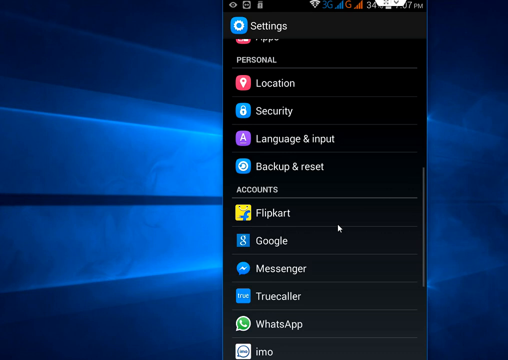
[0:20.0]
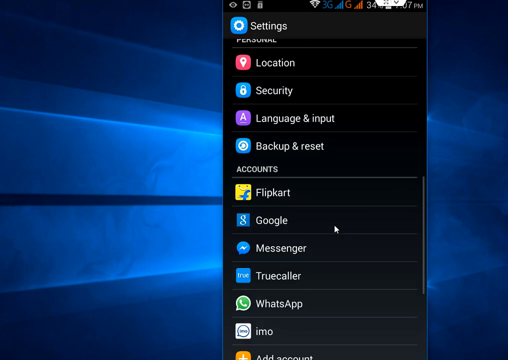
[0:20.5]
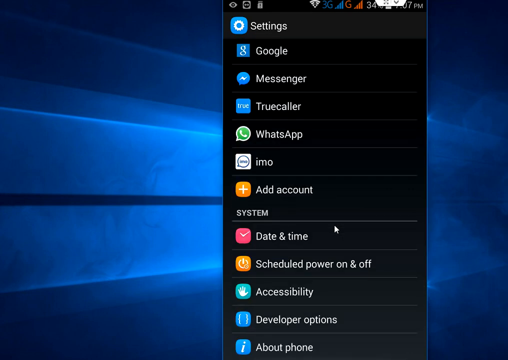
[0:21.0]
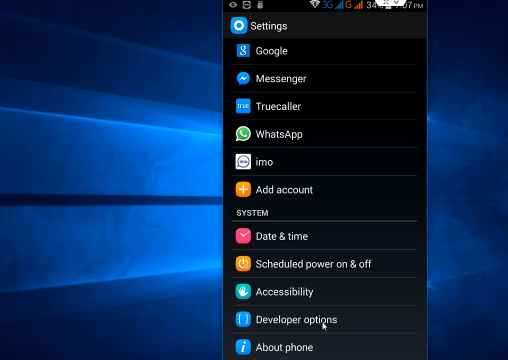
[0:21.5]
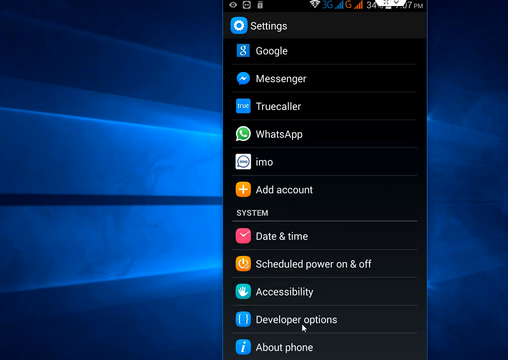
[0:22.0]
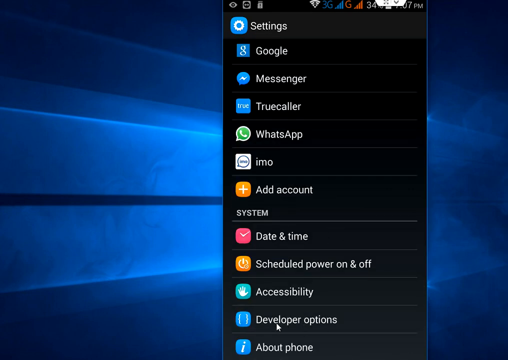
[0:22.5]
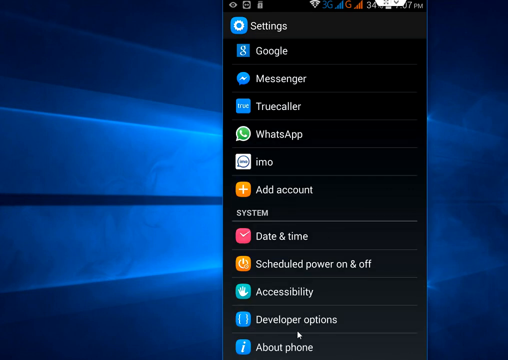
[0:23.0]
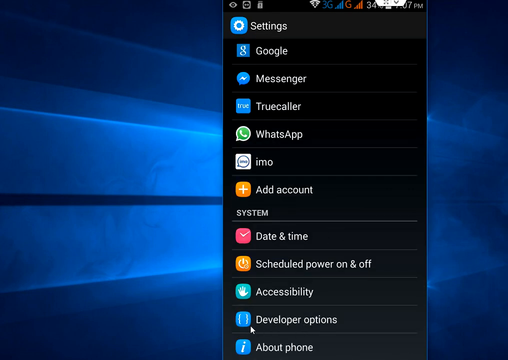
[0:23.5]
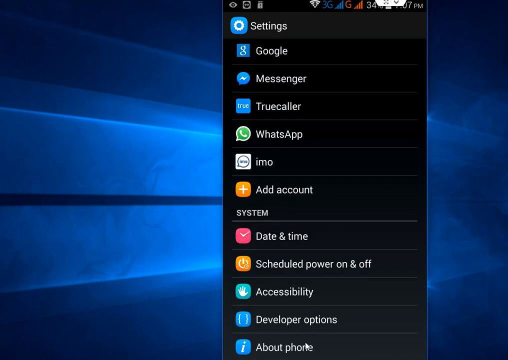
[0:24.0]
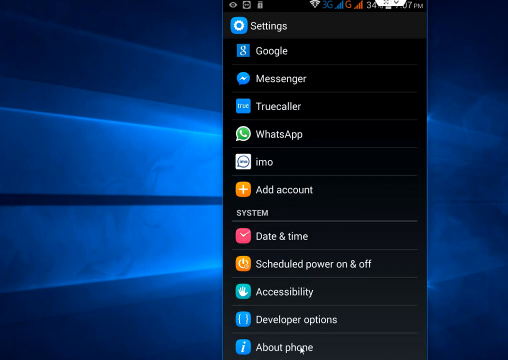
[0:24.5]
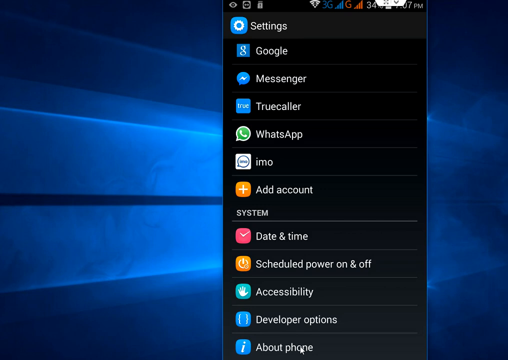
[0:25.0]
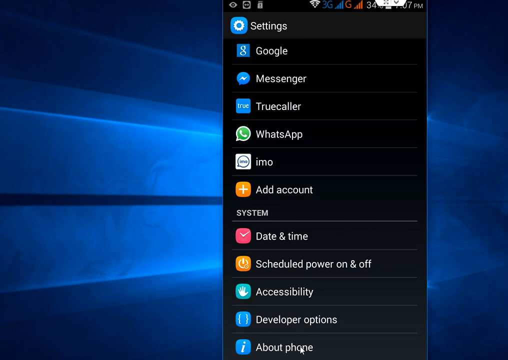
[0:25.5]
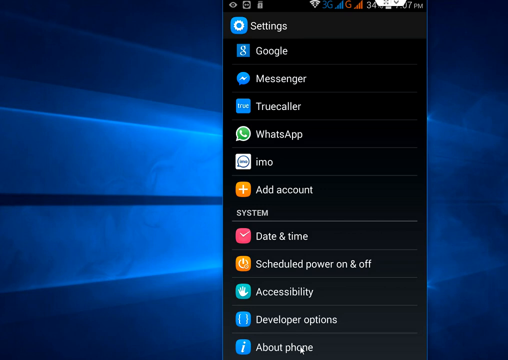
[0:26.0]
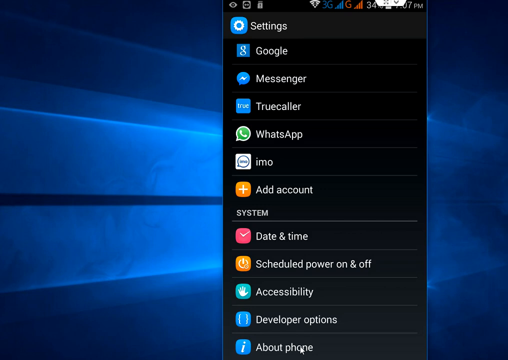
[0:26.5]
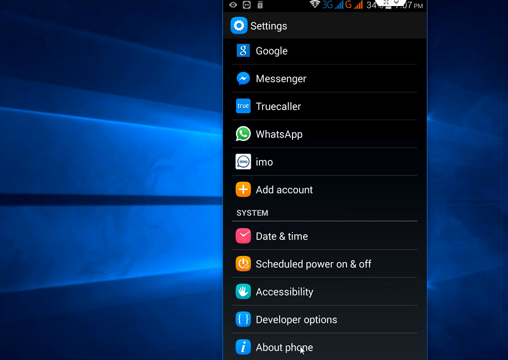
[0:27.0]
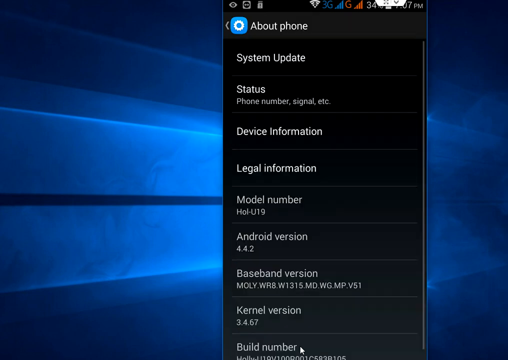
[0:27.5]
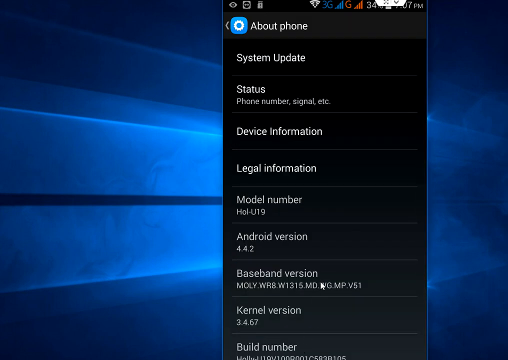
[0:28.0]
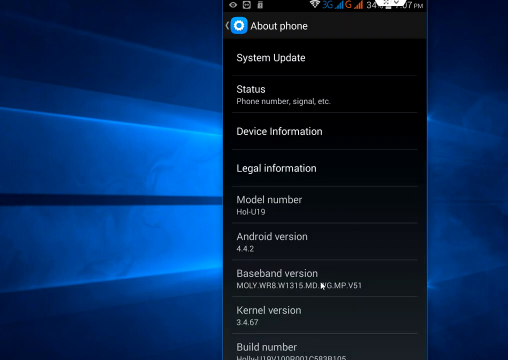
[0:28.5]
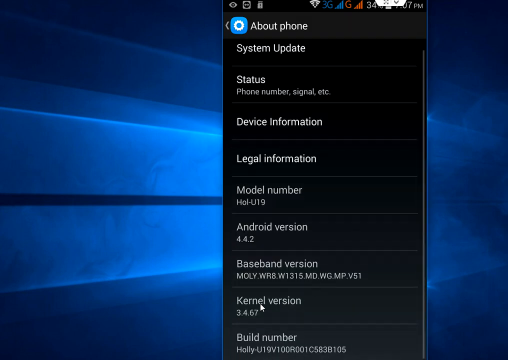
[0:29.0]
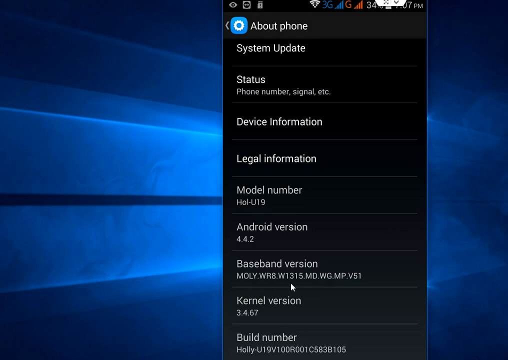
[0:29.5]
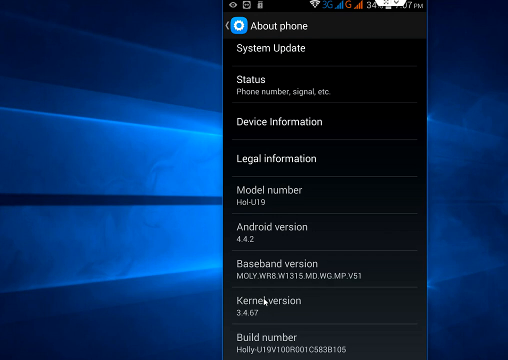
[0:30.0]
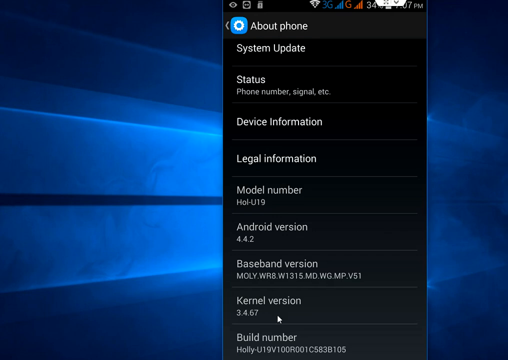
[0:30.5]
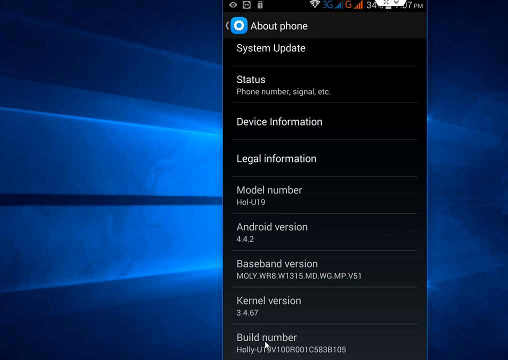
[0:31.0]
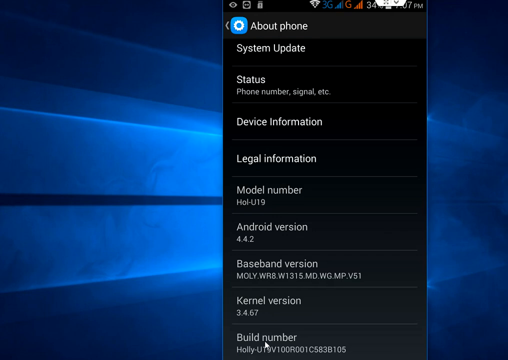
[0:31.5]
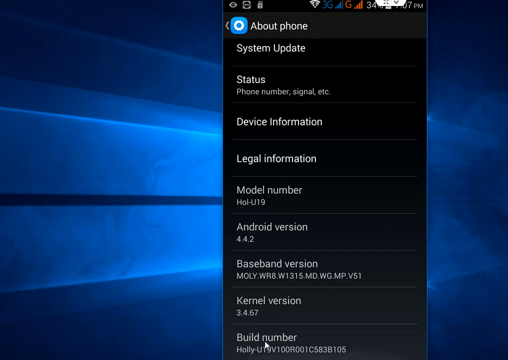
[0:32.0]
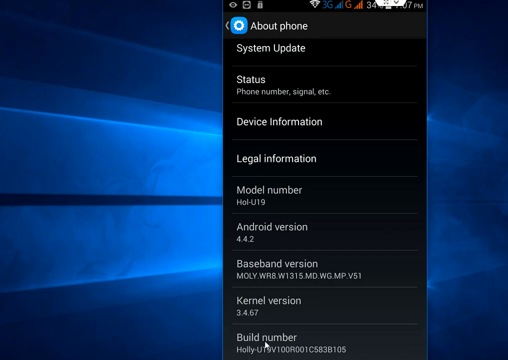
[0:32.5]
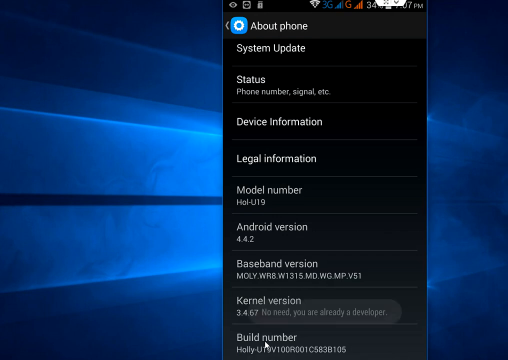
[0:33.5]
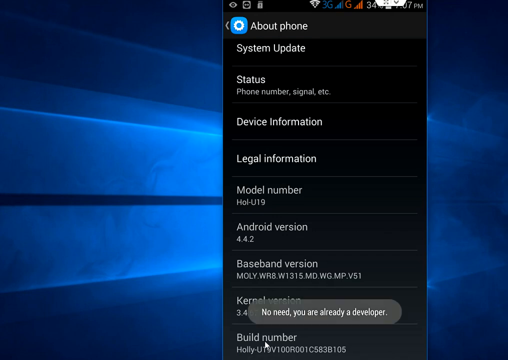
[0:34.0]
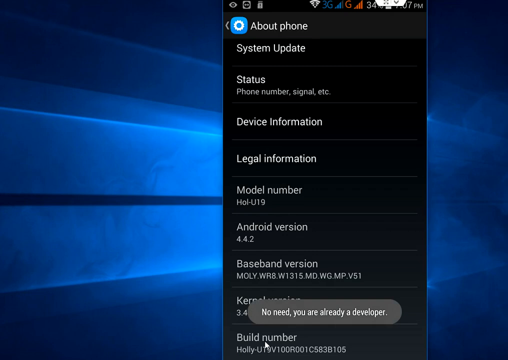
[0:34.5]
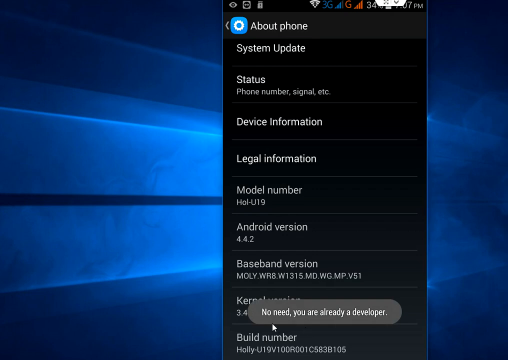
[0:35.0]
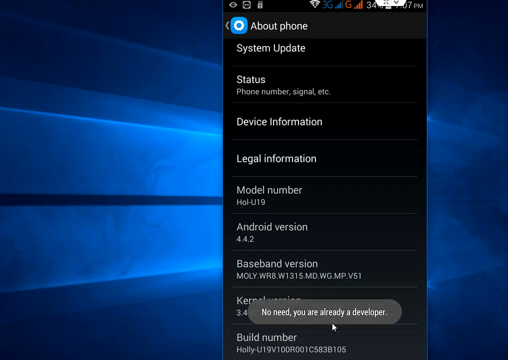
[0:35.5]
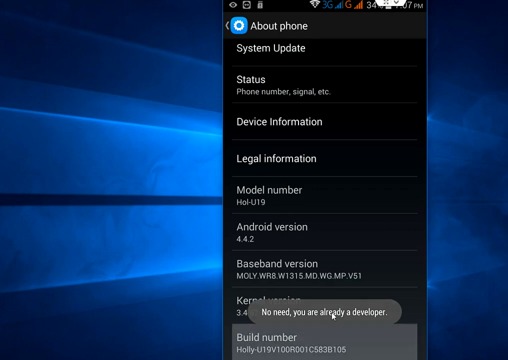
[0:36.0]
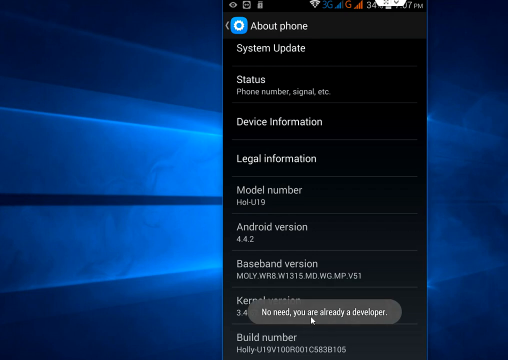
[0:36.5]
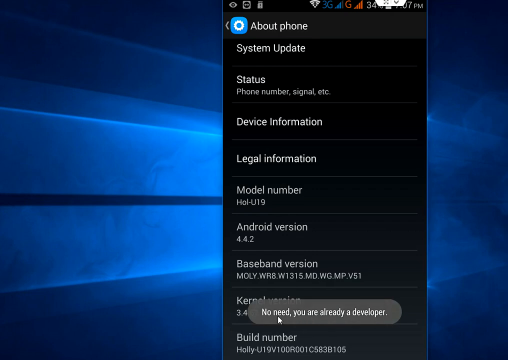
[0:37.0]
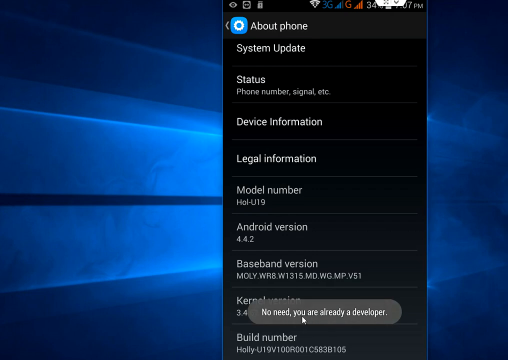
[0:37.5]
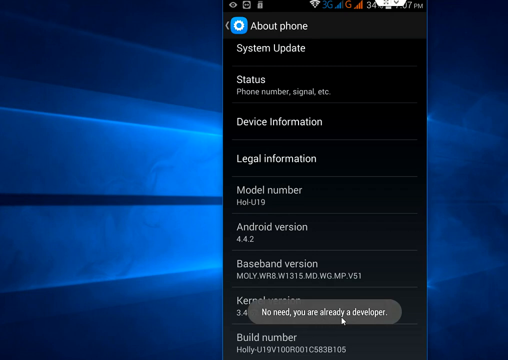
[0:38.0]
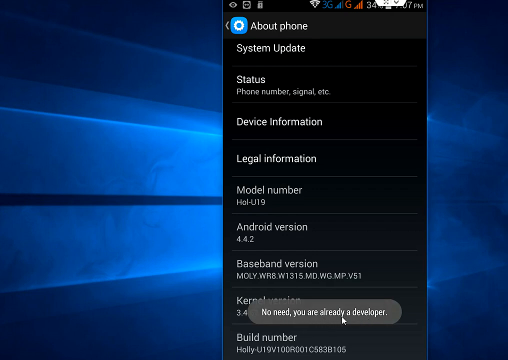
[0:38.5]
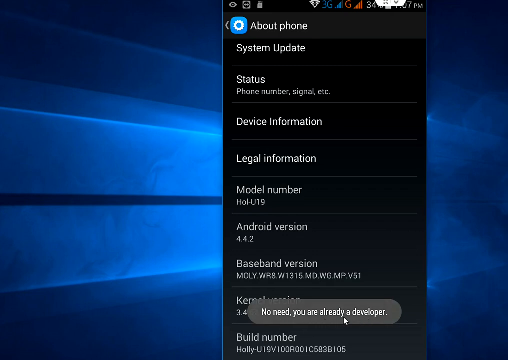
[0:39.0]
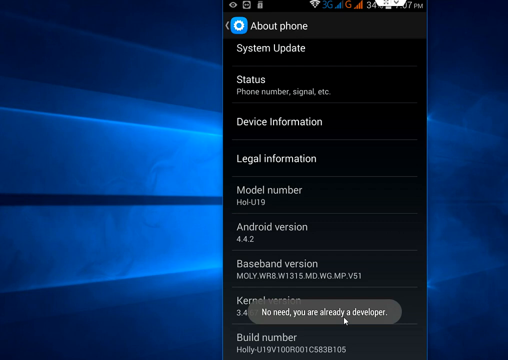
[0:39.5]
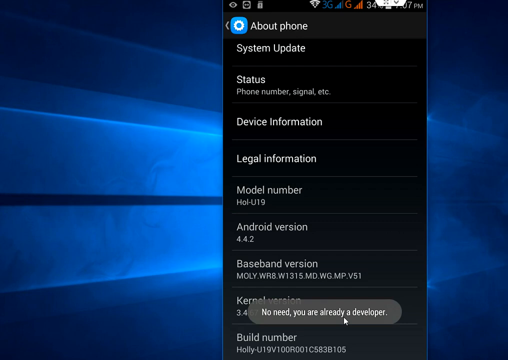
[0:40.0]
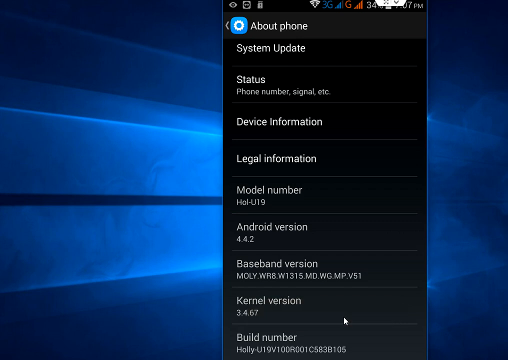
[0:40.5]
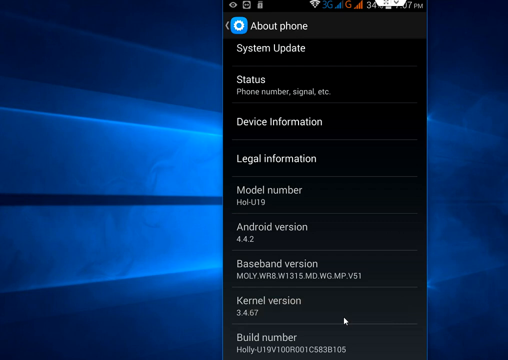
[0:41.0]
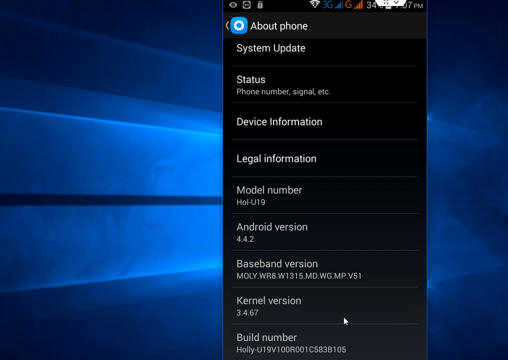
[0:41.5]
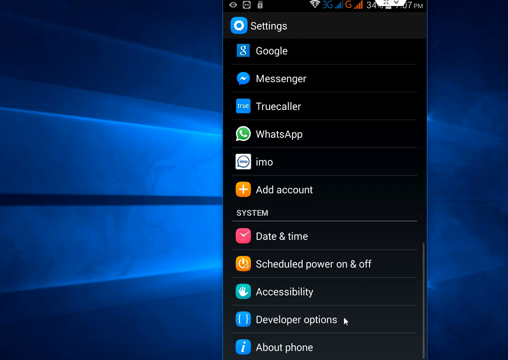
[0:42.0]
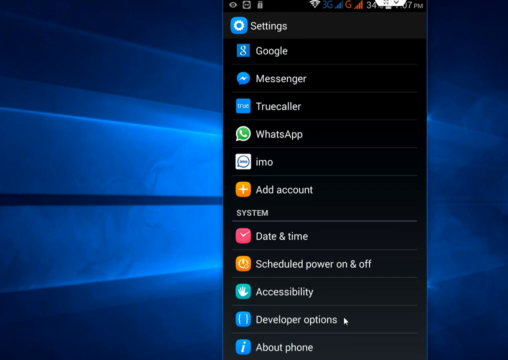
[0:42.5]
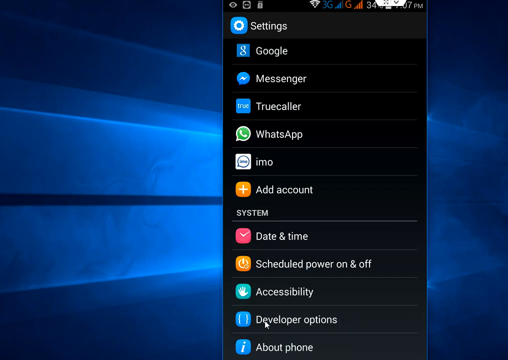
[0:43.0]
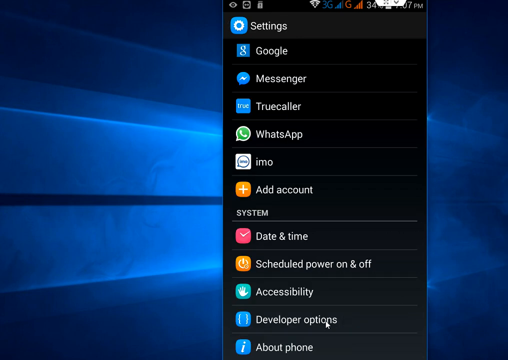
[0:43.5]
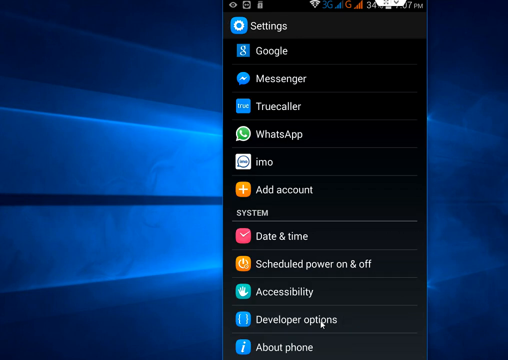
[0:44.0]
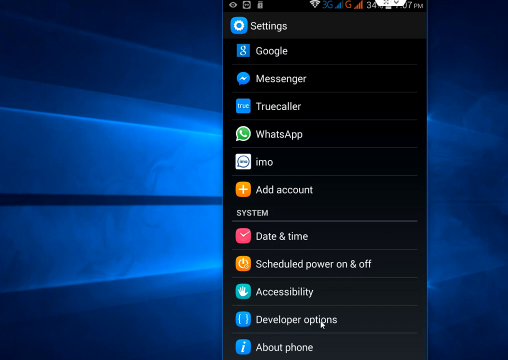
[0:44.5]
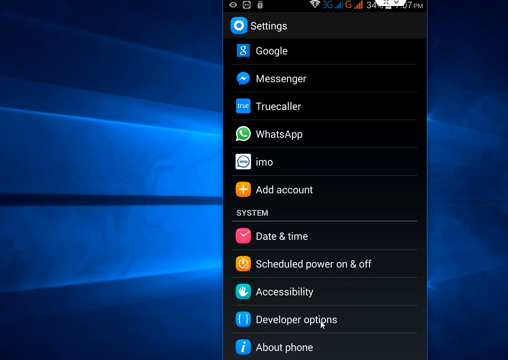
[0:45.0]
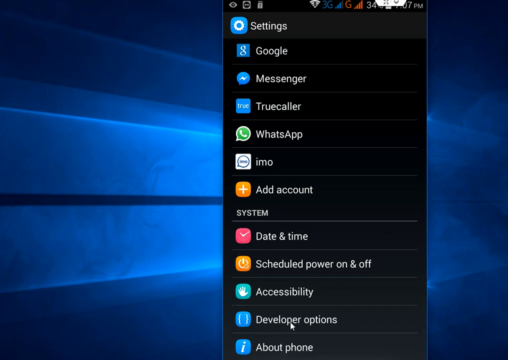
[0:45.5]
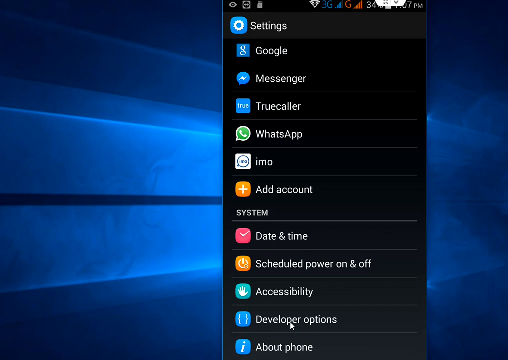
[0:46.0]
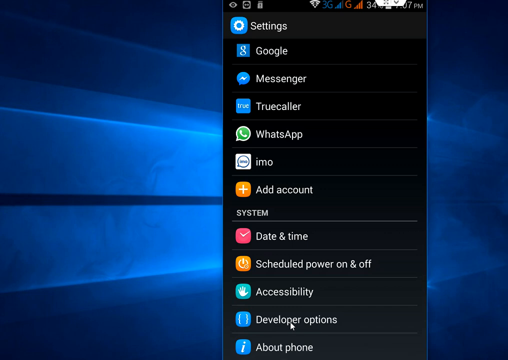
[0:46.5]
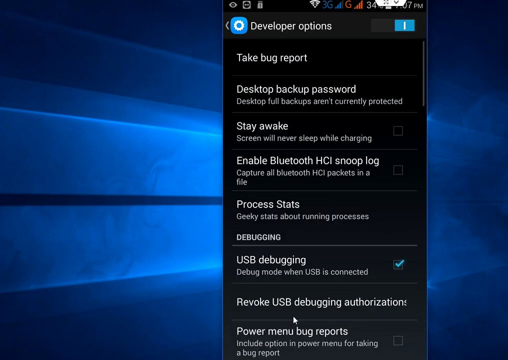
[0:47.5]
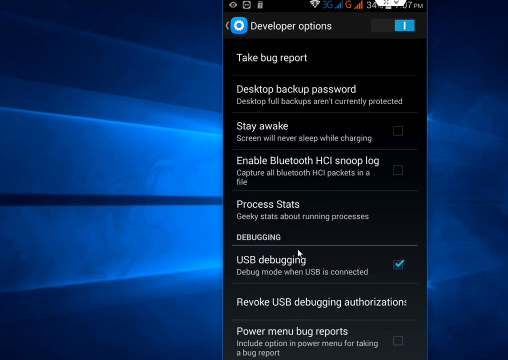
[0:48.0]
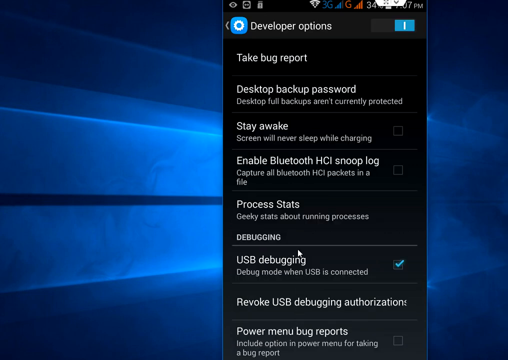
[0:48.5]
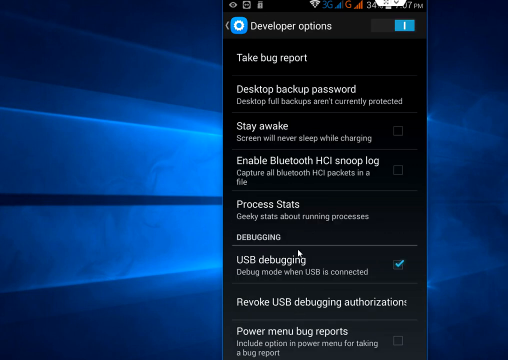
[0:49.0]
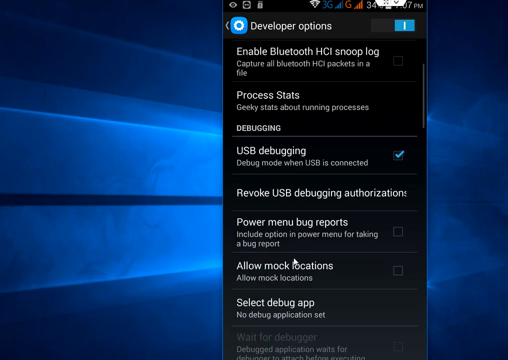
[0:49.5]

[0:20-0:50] The person scrolls down the Settings menu. Under WhatsApp are IMO and add account. Below that, the System heading lists date and time, scheduled power on and off, accessibility, developer options and about phone. The mouse hovers above developer options for a bit, then moves down to about phone and clicks, expanding the about phone menu. It contains multiple headings: system update, status (with phone number, signal, etc.), device information, legal information, the model number, the Android version, the baseband version, the kernel version and, below those, build number. Clicking build number brings up a gray rounded rectangle that says "no need, you are already a developer." The person moves the cursor over that sentence a couple of times, and the box disappears. Back in the Settings menu, they hover above developer options and click it, and it expands. The developer options include take bug report, desktop backup password, stay awake, enable Bluetooth HCI snoop log, process stats, debugging, revoke USB debugging authorization and power menu bug reports. USB debugging is checked.